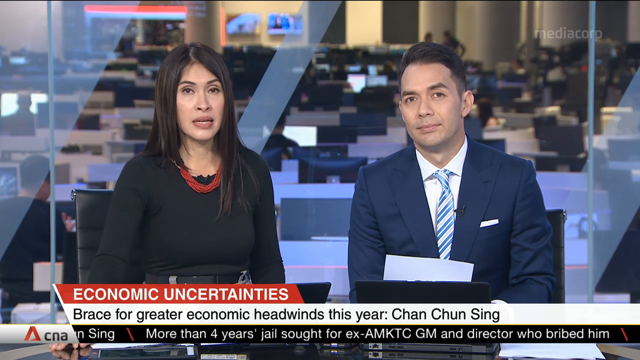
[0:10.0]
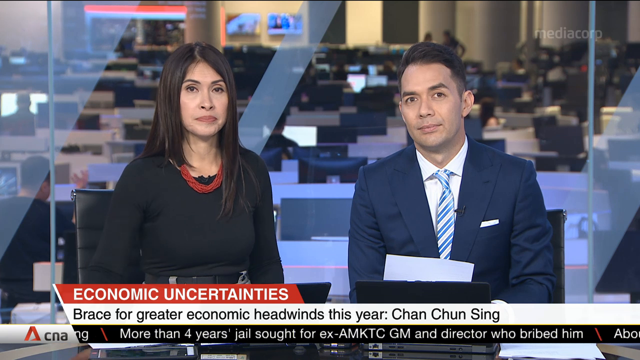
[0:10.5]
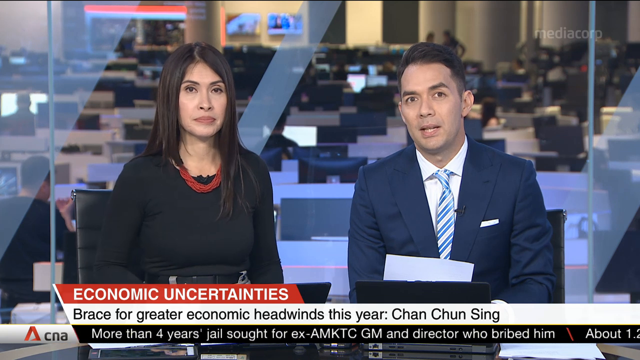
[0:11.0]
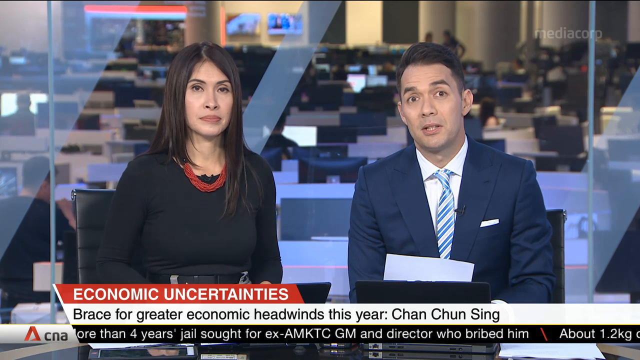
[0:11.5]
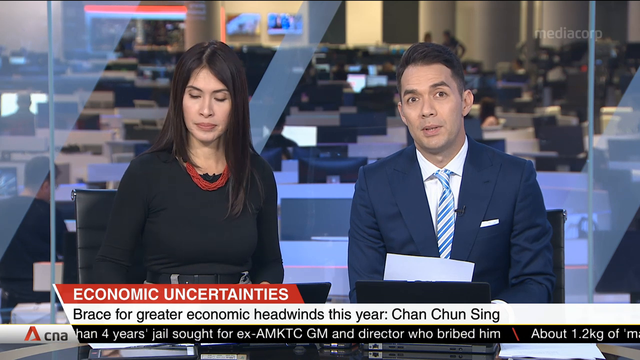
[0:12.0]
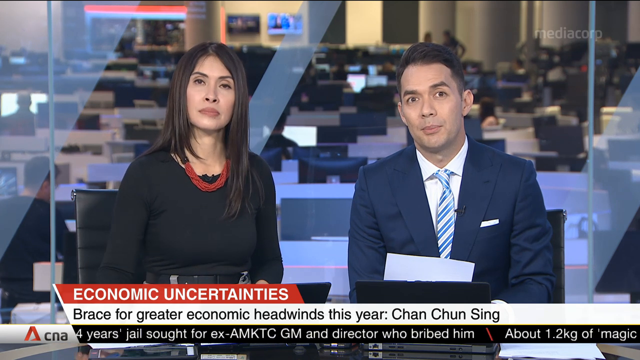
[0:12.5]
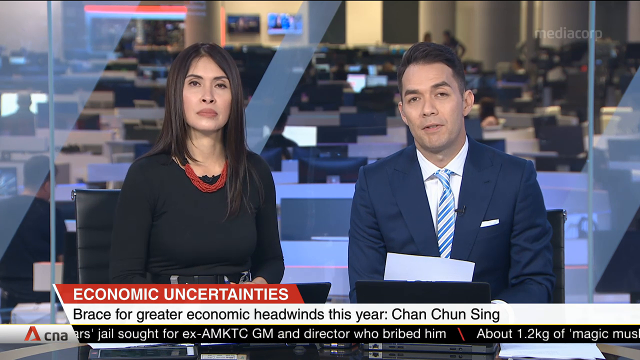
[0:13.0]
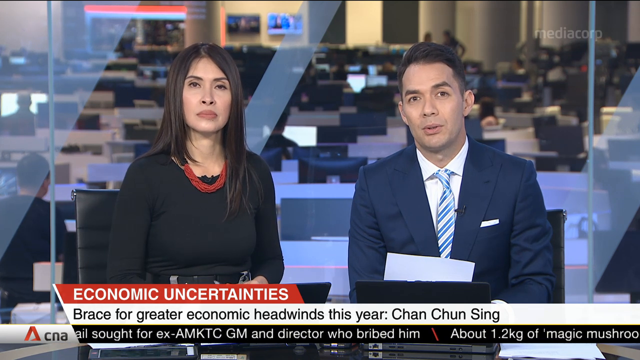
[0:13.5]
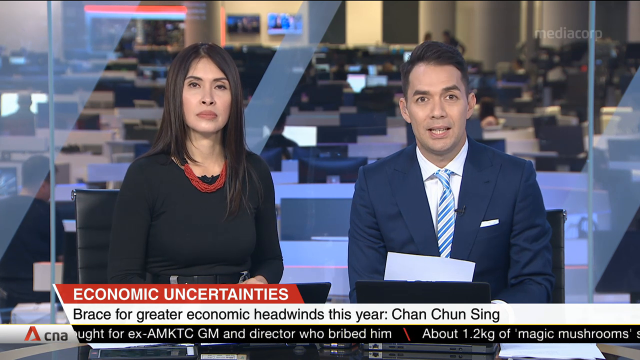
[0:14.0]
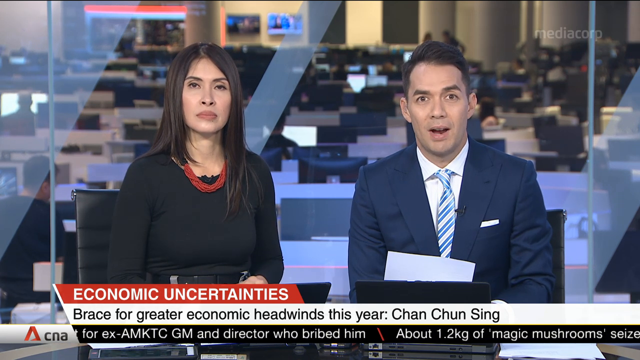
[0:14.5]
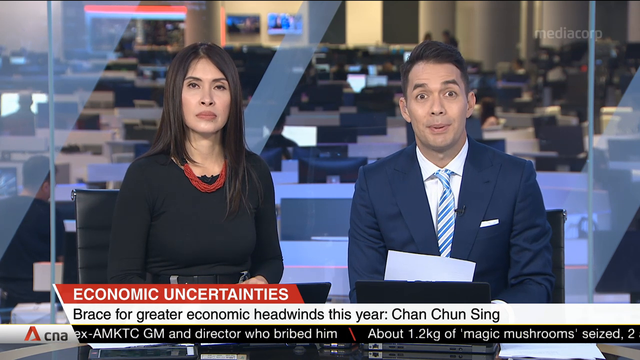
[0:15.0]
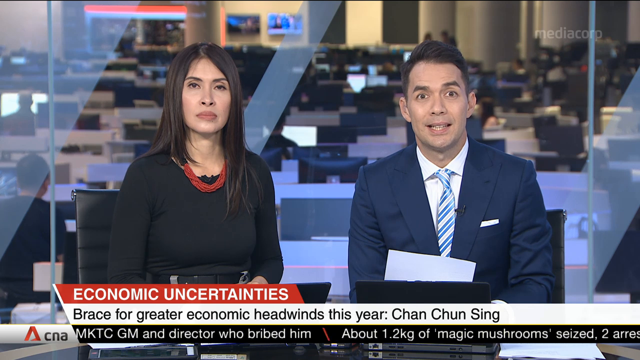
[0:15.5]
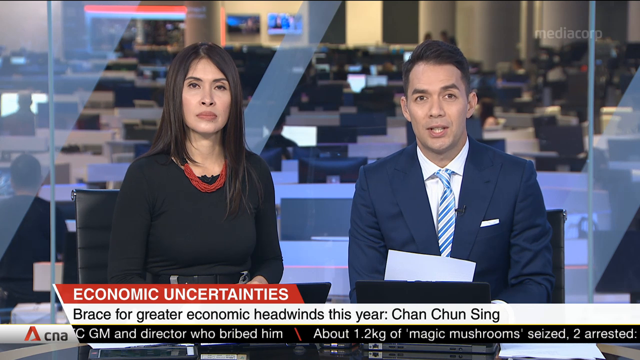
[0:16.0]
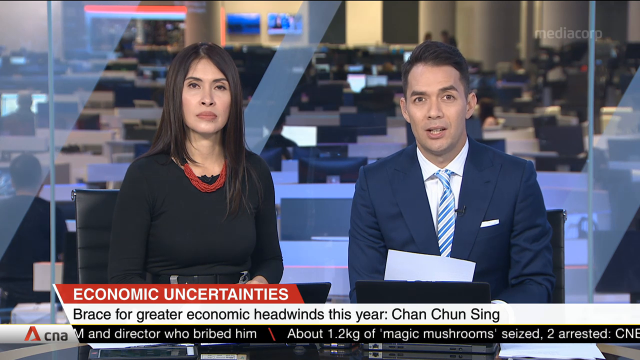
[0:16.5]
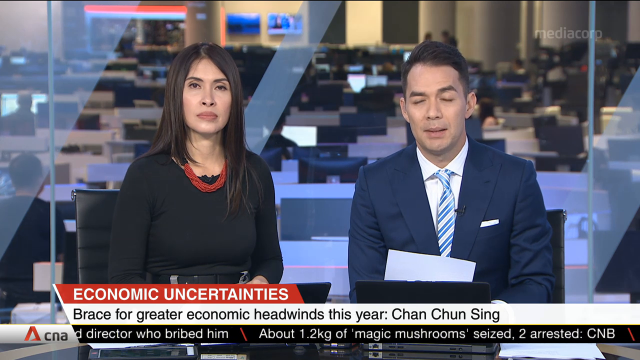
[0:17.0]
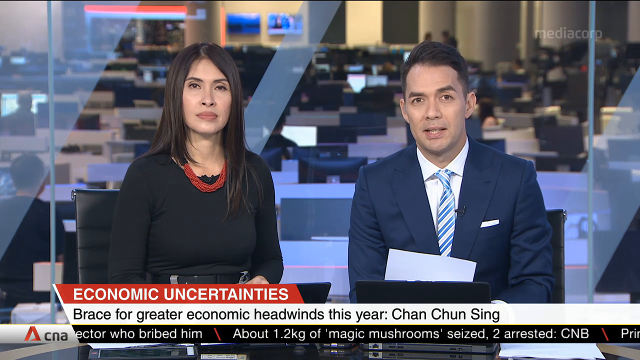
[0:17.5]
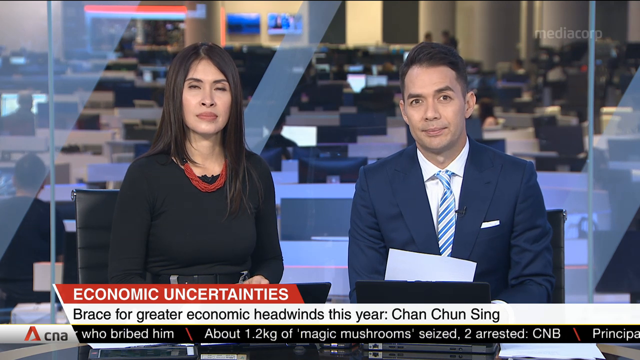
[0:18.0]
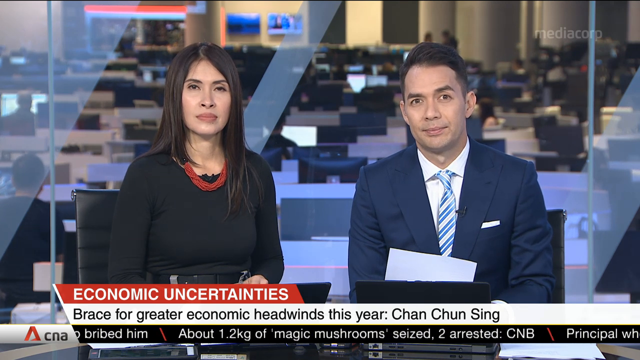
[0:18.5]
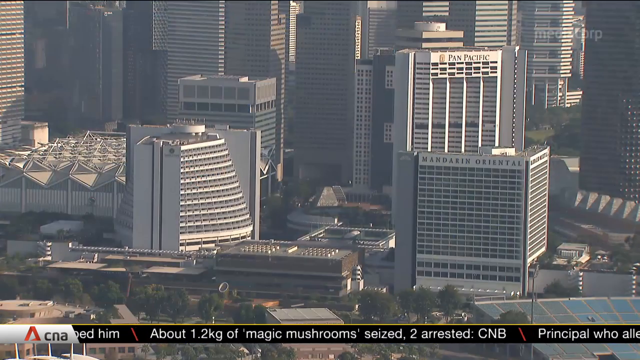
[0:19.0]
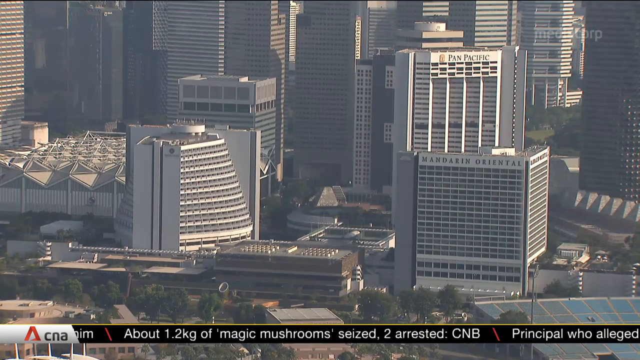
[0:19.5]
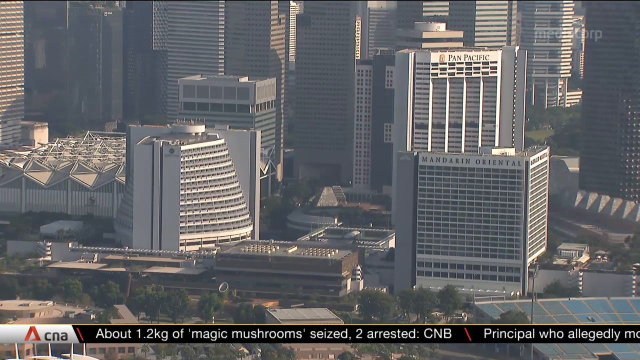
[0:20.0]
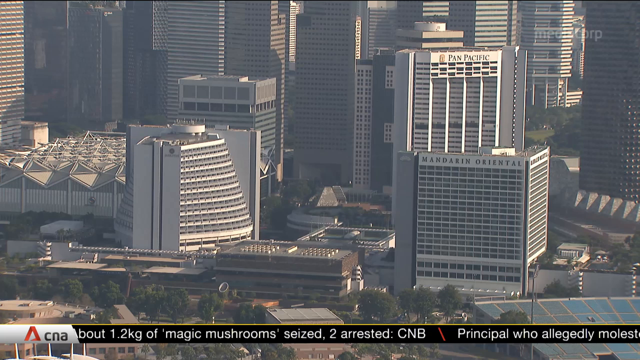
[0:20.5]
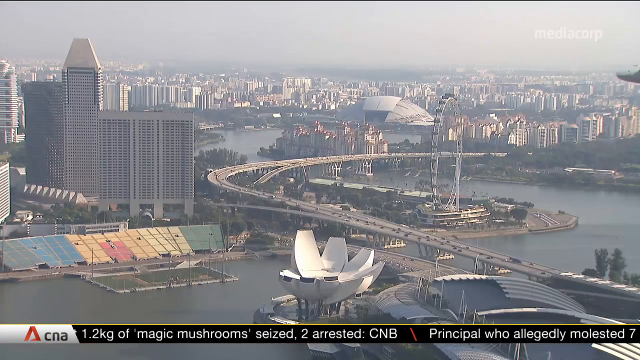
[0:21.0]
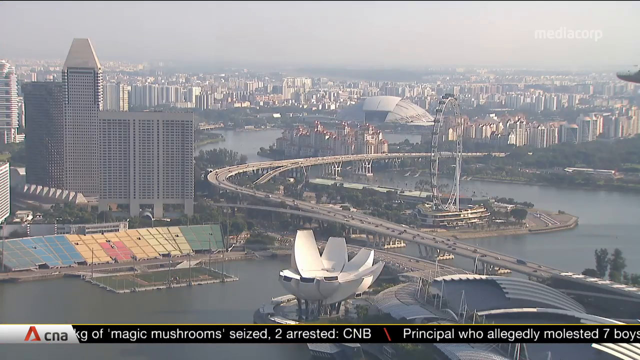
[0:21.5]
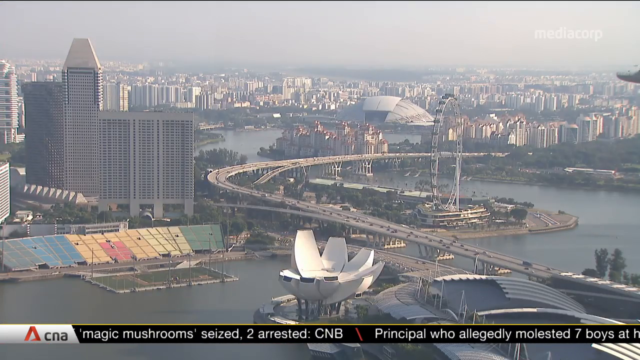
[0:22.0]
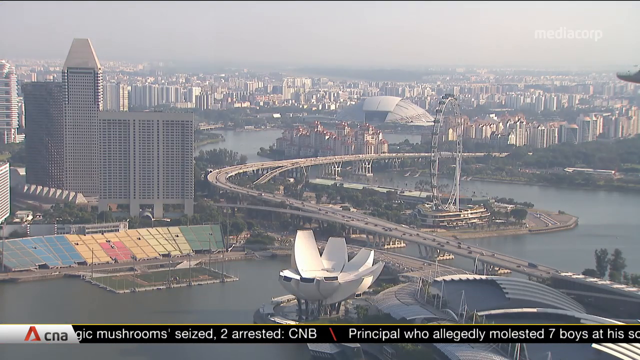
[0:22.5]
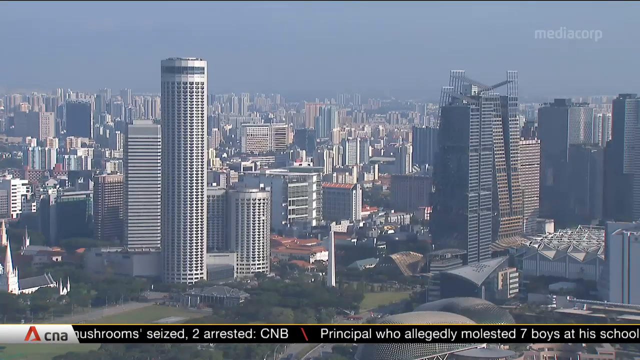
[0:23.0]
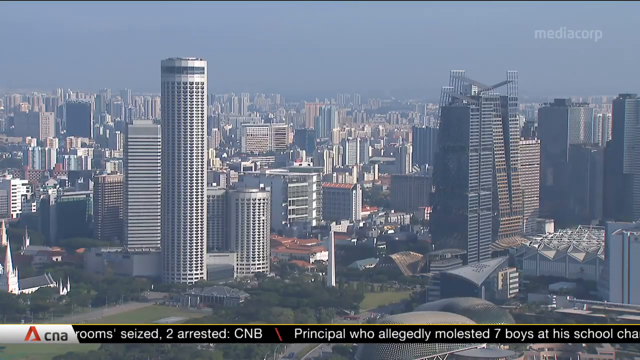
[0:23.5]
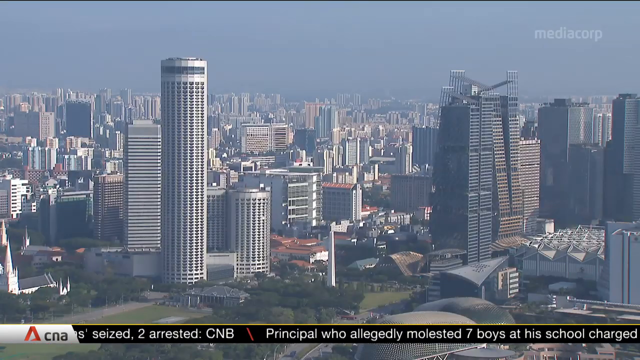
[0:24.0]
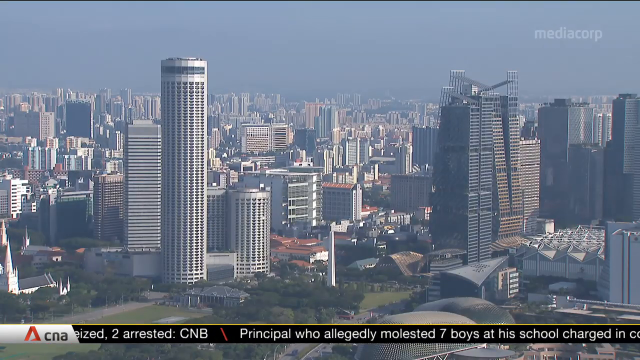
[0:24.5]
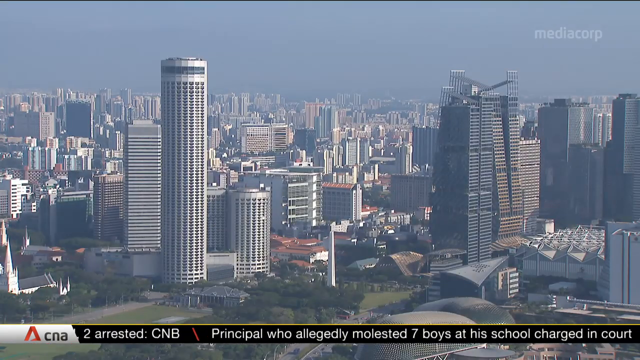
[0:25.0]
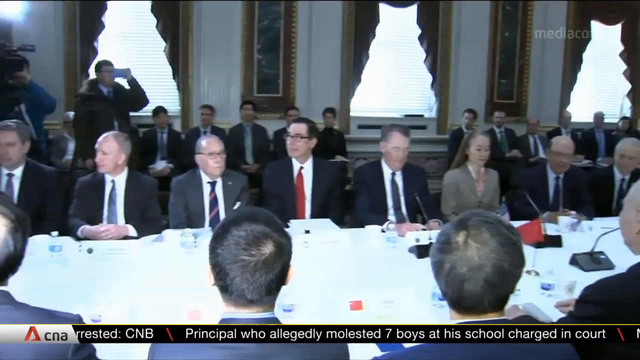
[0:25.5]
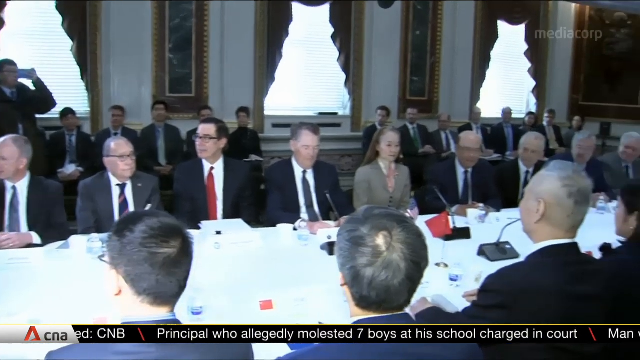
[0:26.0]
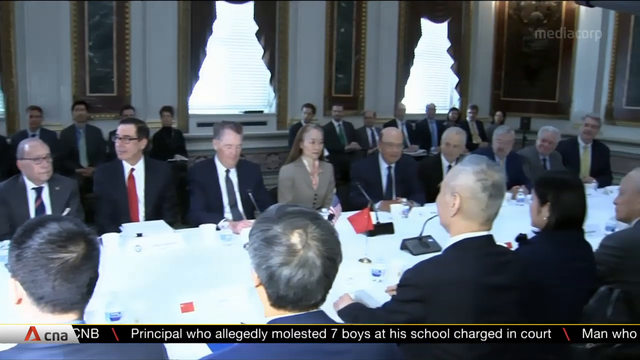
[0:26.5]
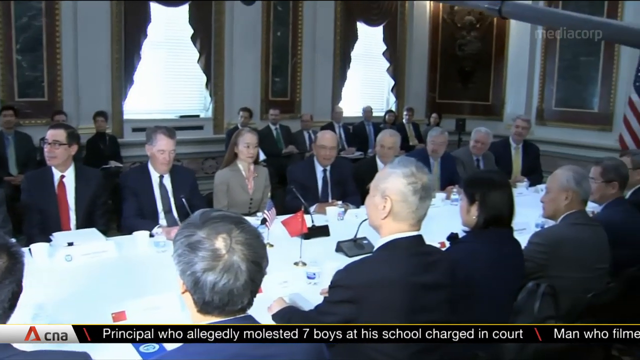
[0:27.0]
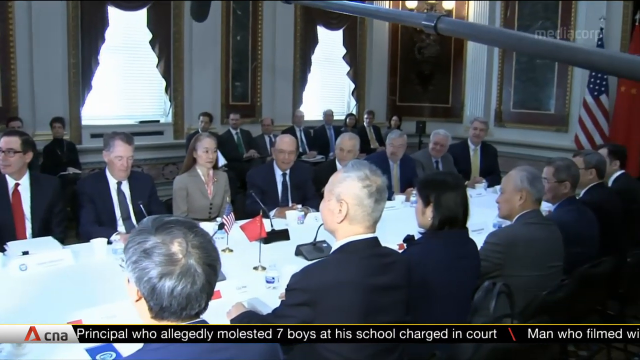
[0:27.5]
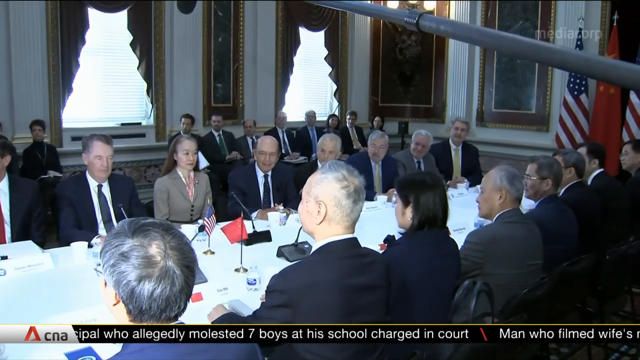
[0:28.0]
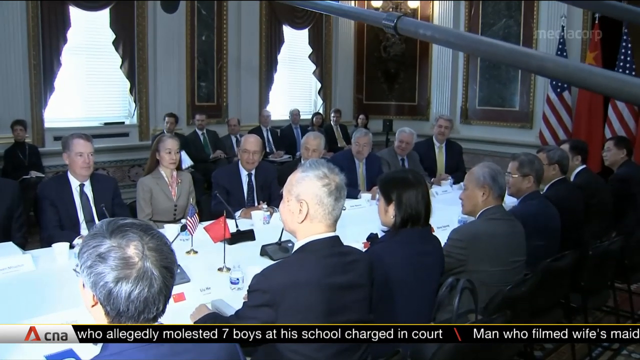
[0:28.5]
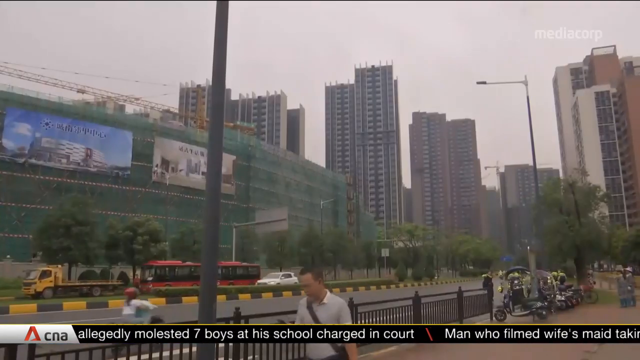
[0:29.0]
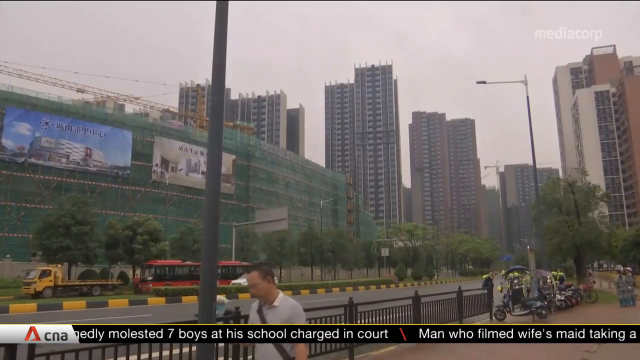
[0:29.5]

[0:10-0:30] The female presenter finishes speaking and the male presenter begins delivering his script to camera. He holds a paper script, but both presenters read off an autocue when they speak rather than from the scripts on their desk. The top caption, in white font on a red background, now reads "Economic uncertainties", and the line beneath, in black font on a white background, reads "Brace for greater economic headwinds this year. Chan Chun Sing". The video cuts to a VT showing tall buildings forming a cityscape, among them the Mandarin Oriental and the Pan Pacific. A much wider shot of a city follows, with a river and a highway that runs across the river forming a bridge, lots of tall buildings, and a ferris wheel in the foreground; the road is very busy with cars. Another wide shot shows a very busy, densely packed skyline with some cylindrical skyscrapers and some more traditional rectangular ones. Next comes what appears to be a large conference: a table seating approximately 20 people, mostly men though at least one woman, who all look middle-aged, with more people sitting along the edges of the room watching. American and Chinese flags are against the wall.